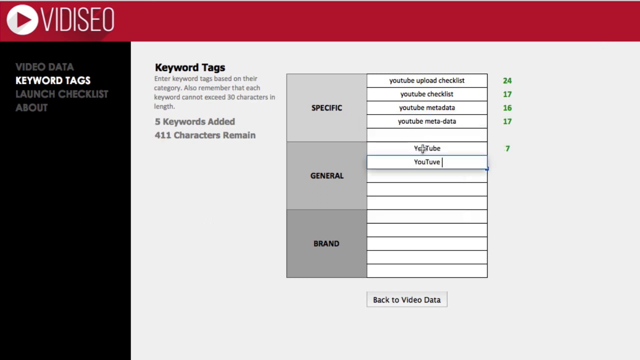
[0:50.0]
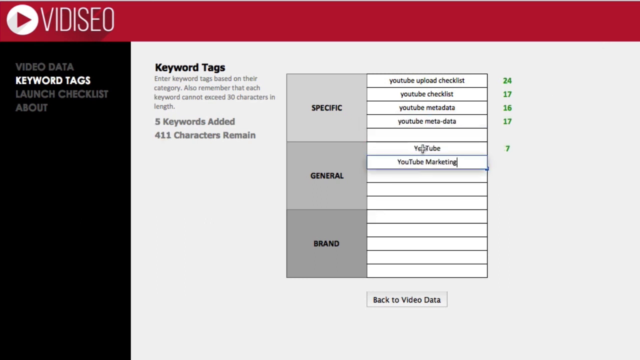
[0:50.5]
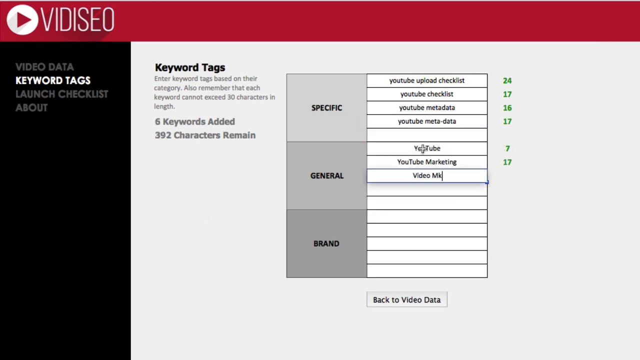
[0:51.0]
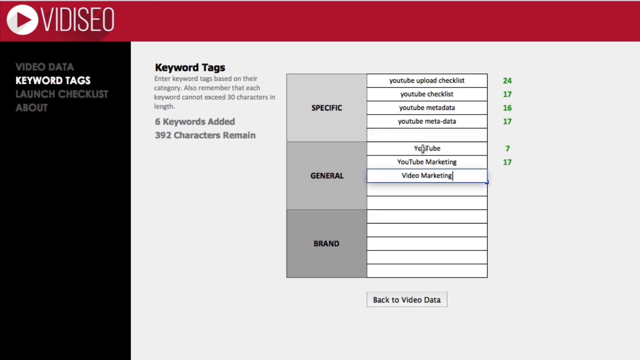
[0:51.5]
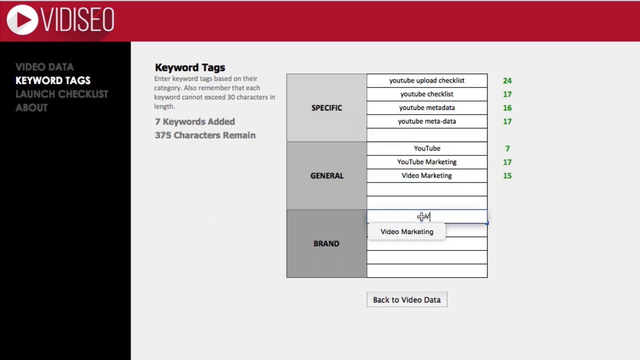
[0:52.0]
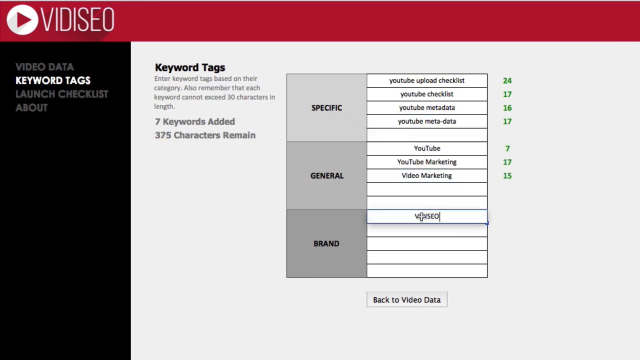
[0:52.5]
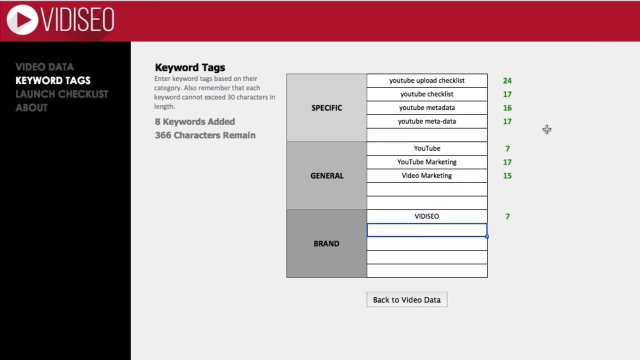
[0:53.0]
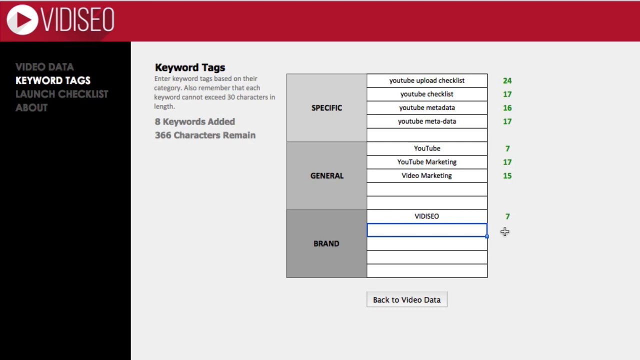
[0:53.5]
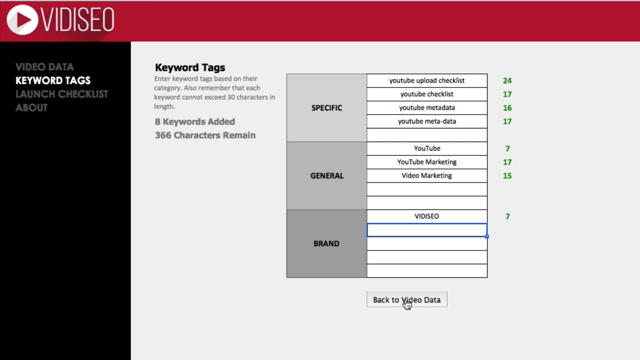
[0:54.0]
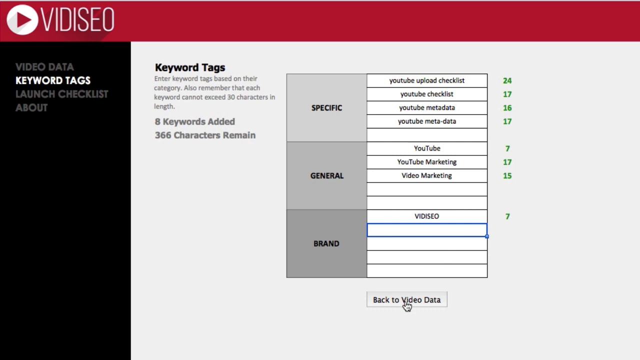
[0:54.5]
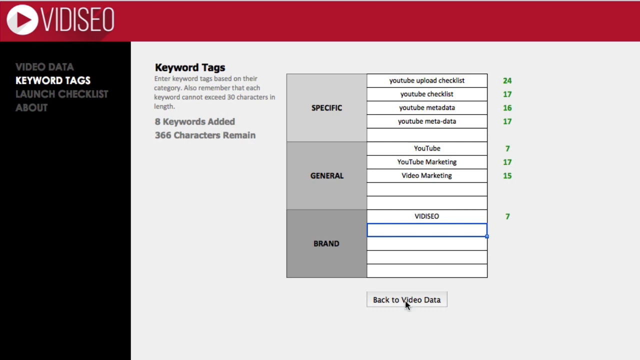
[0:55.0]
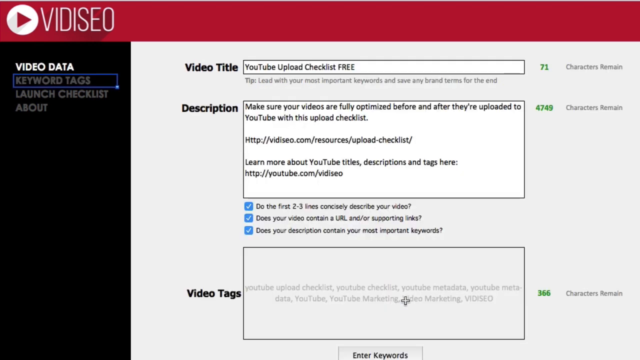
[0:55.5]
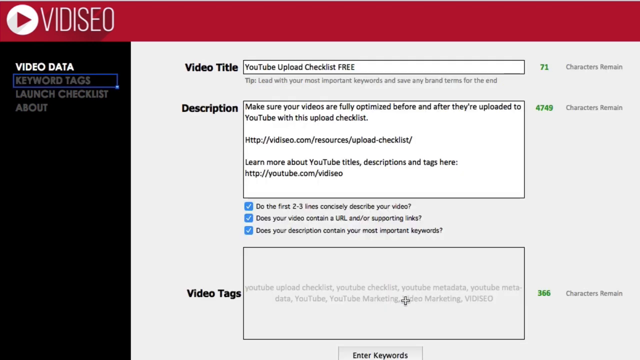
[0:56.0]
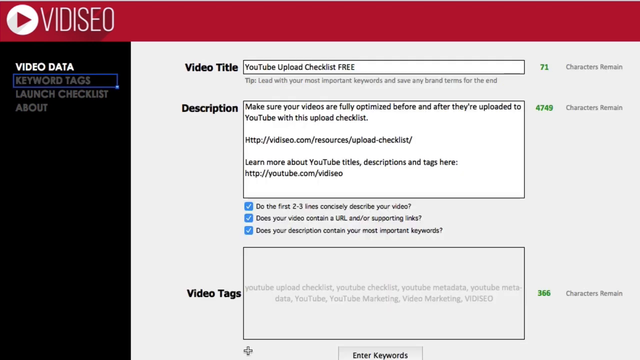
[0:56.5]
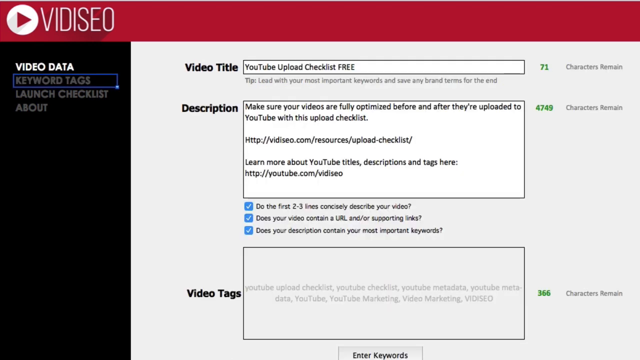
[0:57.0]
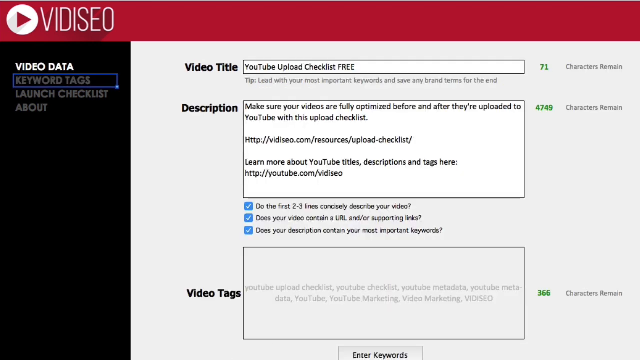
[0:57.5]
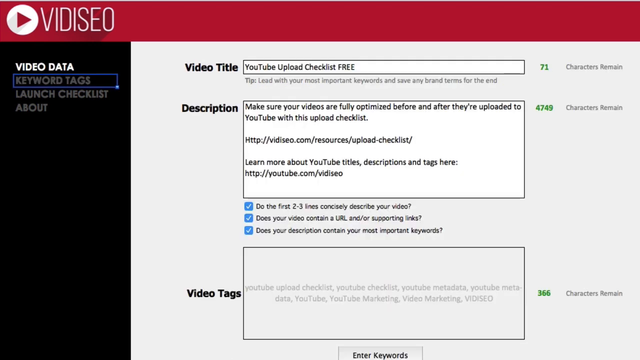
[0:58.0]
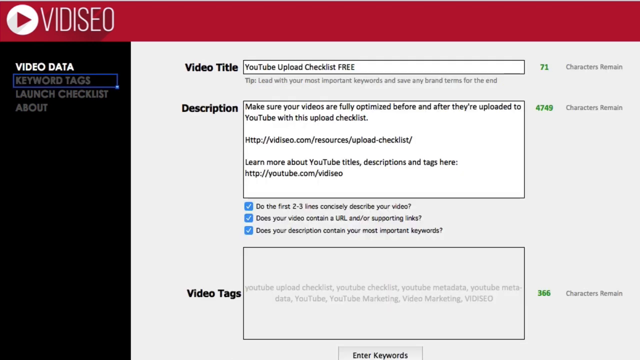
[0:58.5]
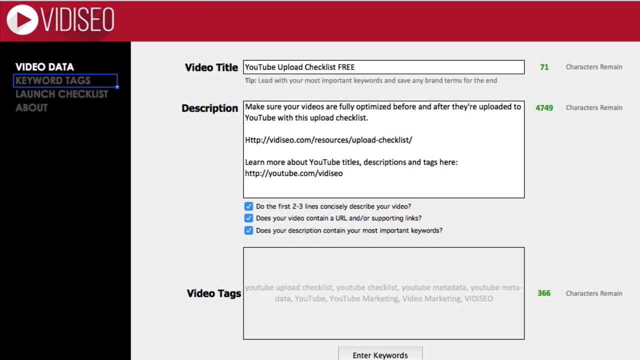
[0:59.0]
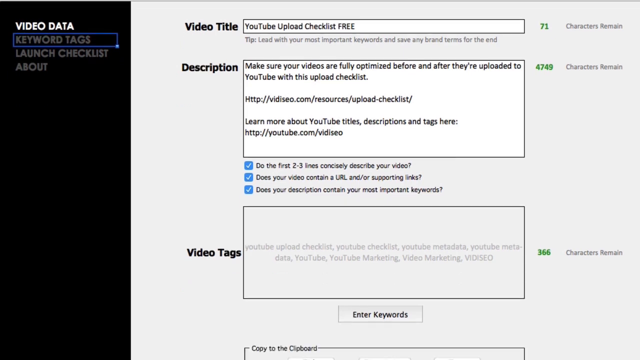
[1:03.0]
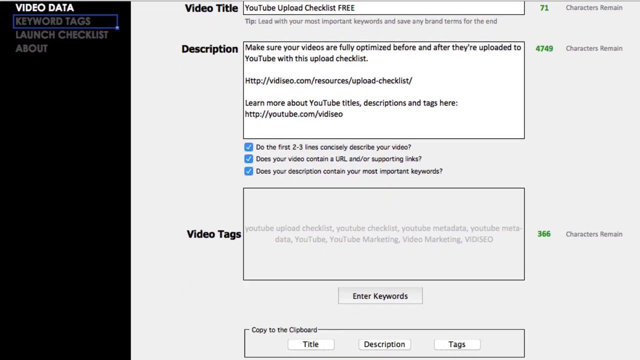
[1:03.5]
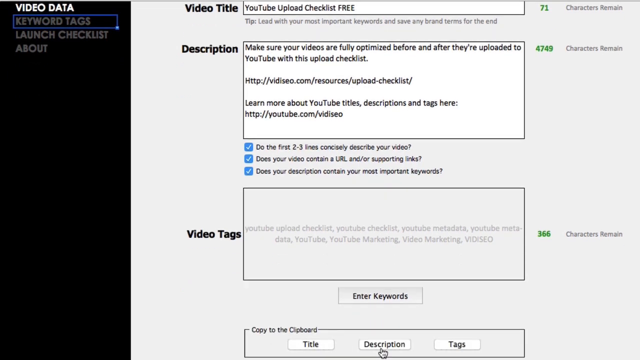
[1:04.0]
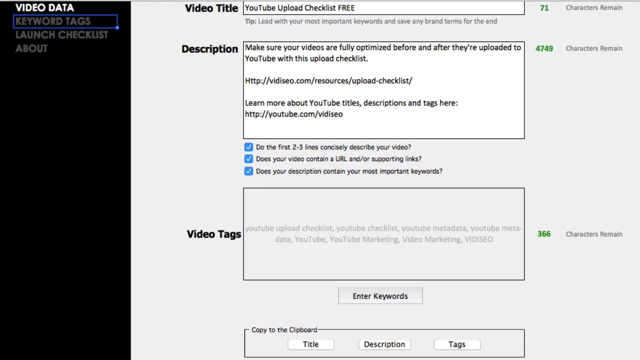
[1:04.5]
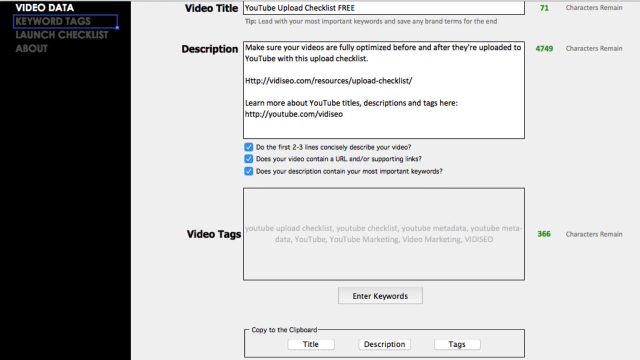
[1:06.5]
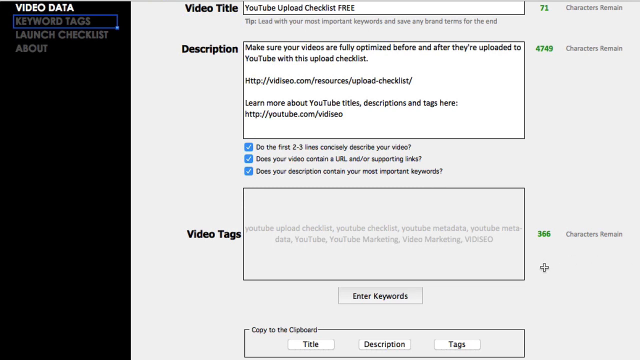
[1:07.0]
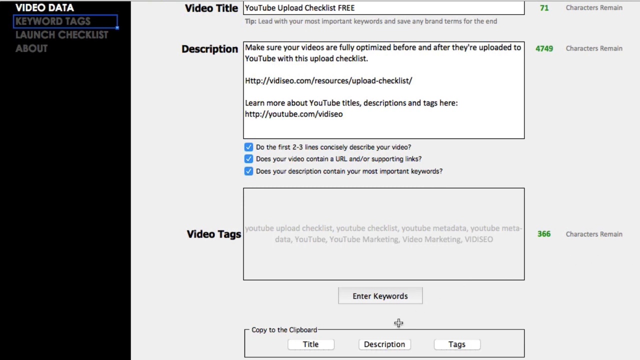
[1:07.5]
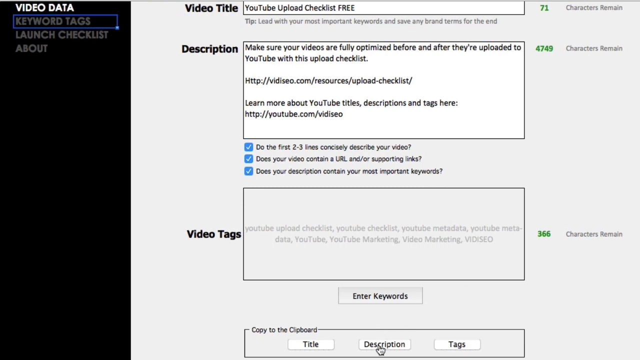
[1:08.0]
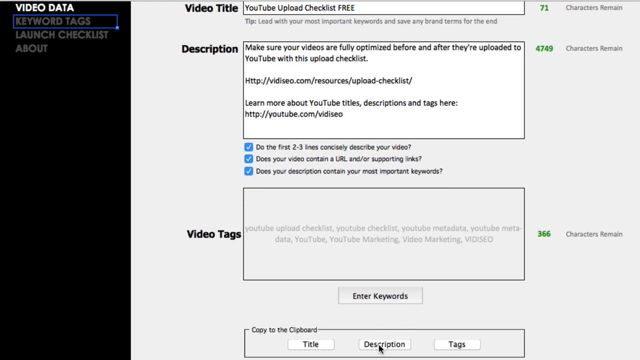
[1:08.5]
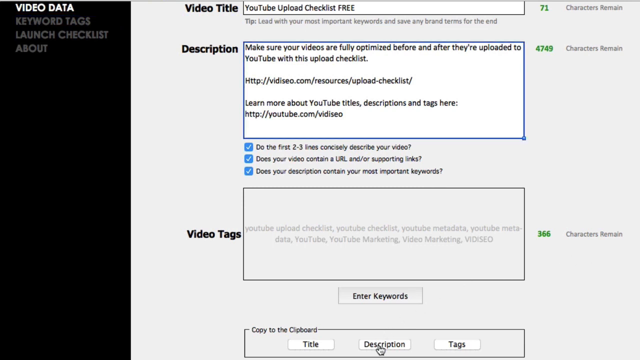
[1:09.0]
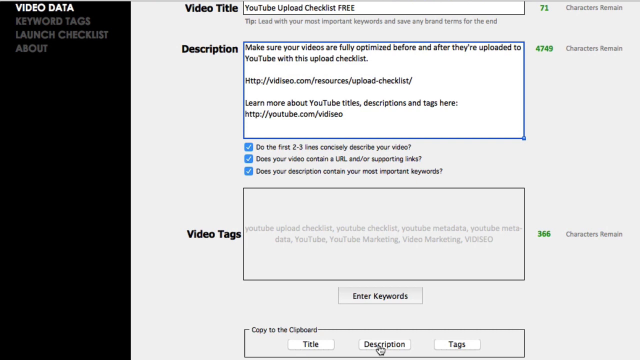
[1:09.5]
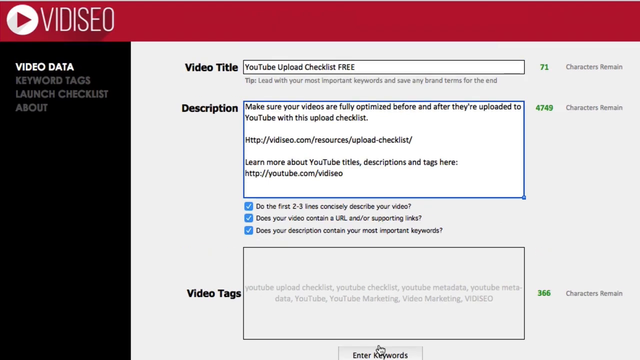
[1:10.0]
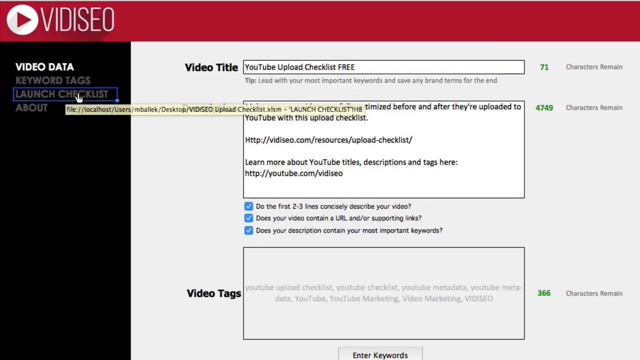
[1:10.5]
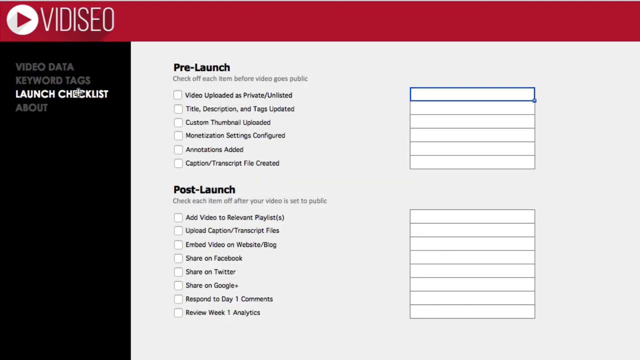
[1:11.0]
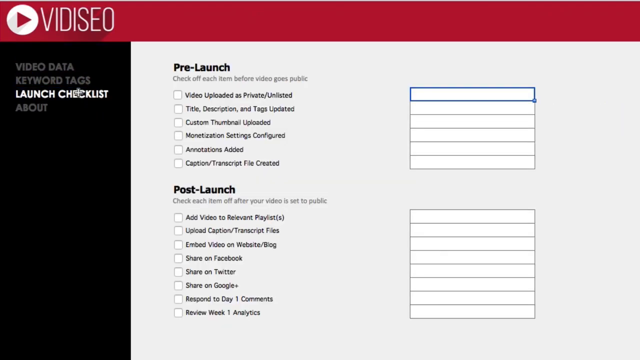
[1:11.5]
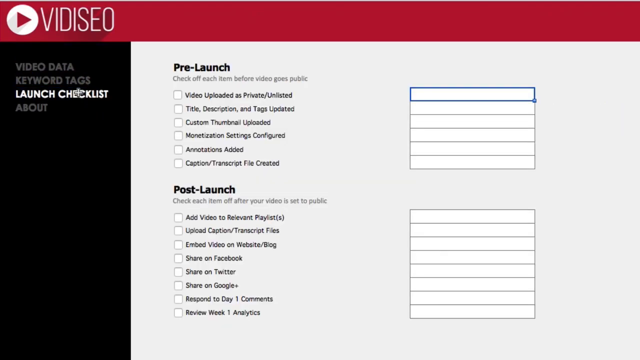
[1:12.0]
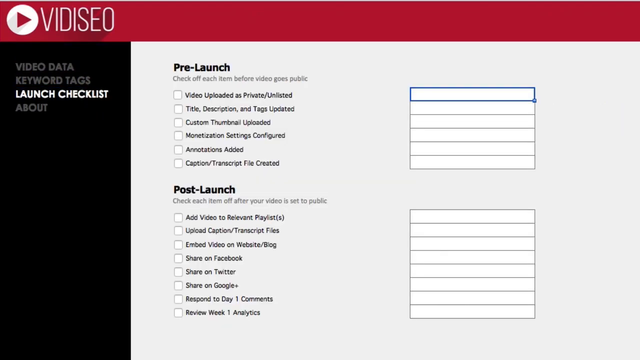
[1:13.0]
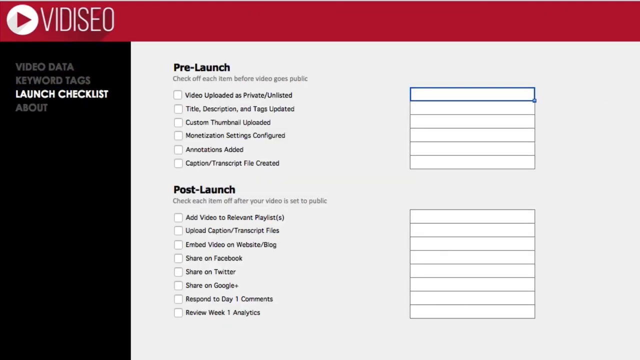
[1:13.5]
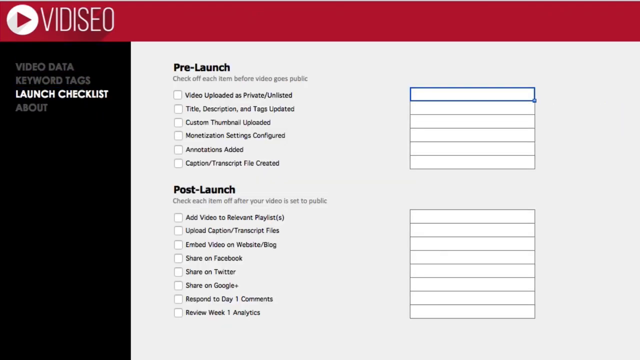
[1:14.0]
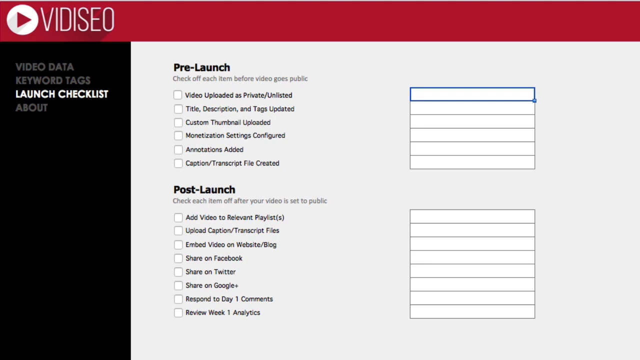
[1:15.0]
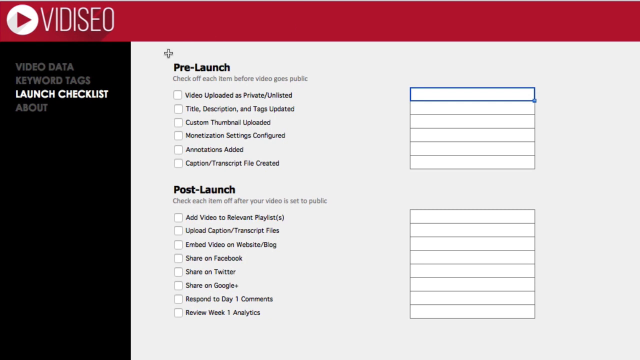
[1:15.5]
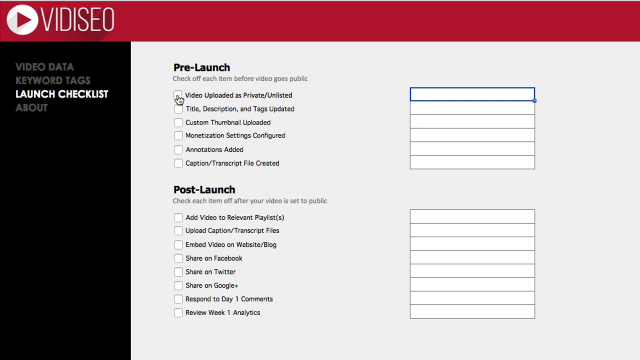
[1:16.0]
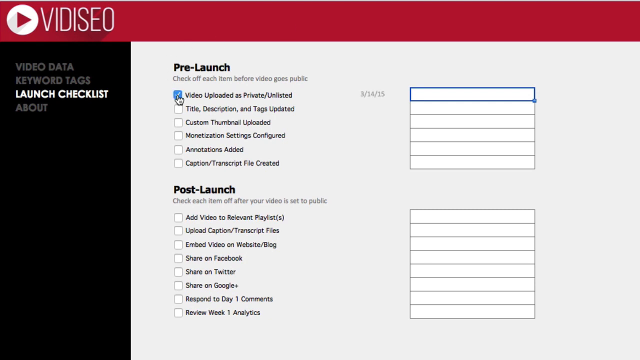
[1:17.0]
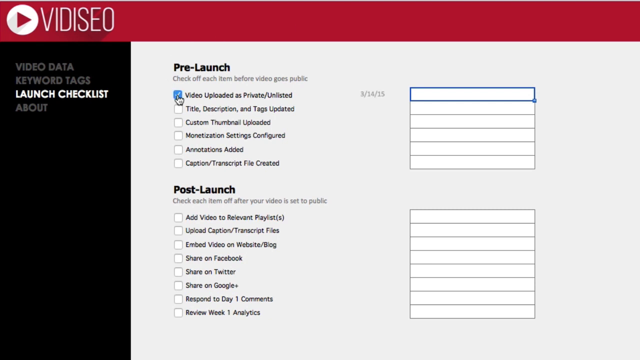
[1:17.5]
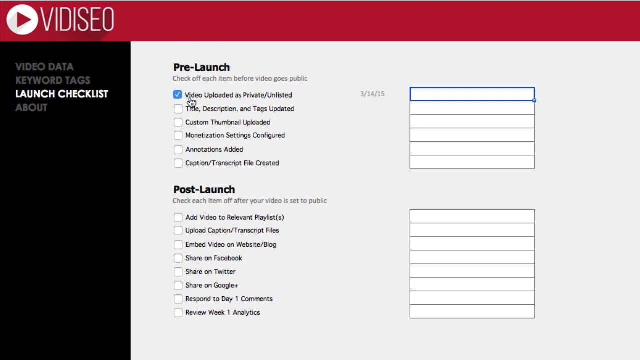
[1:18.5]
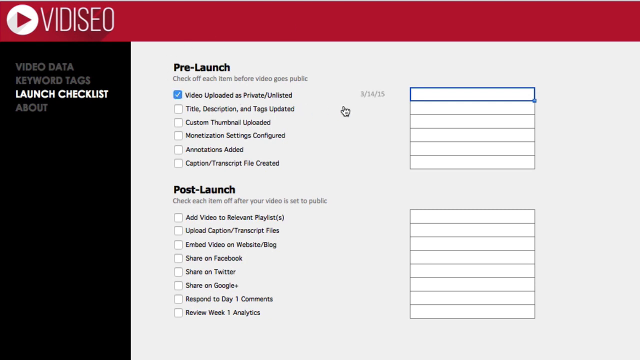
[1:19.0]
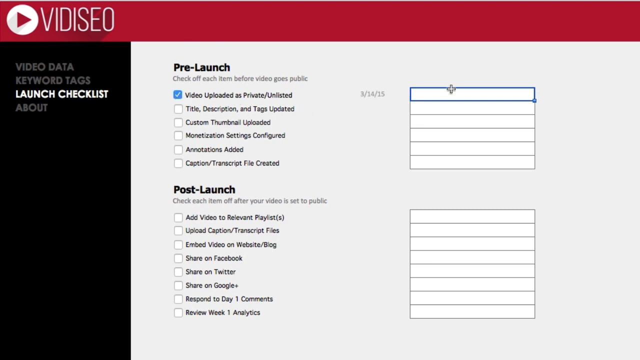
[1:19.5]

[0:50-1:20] The keyword tag page has three categories: specific, general, and brand. Below "keyword tag" the text reads "enter keyword tag based on their category. Also remember that each keyword cannot exceed 30 characters in length." The page totals the keywords added and characters remaining, with the column on the right totaling the characters. Specific has four entries, general has three, and brand has one. A button at the bottom reads "back to video data," and the view toggles back and forth between the previous screen and the tags. The view then scrolls near the bottom to go to the next page, the launch checklist, which contains information about pre- and post-launch. Everything is in a gray tone, and a red bar at the top reads "VIDISEO."